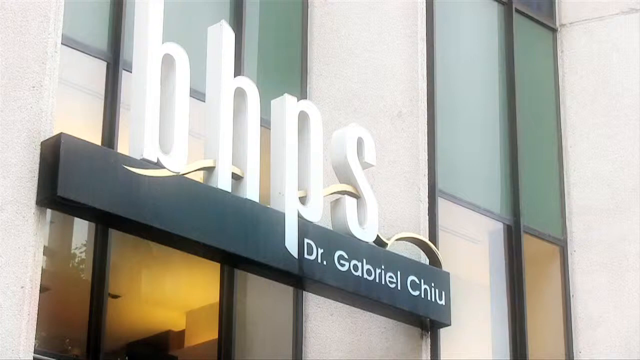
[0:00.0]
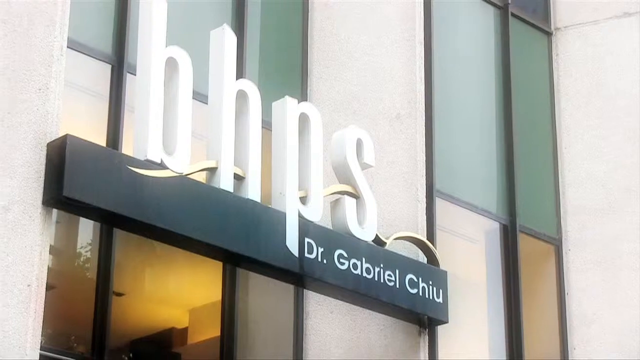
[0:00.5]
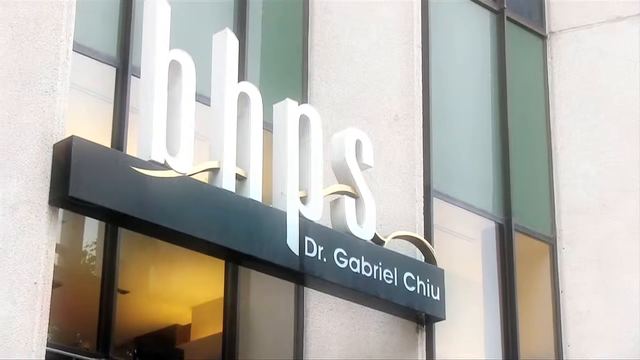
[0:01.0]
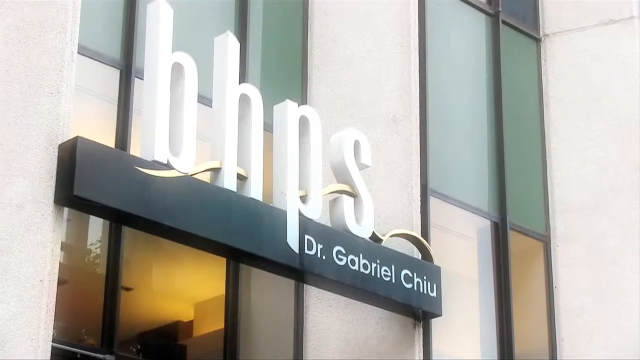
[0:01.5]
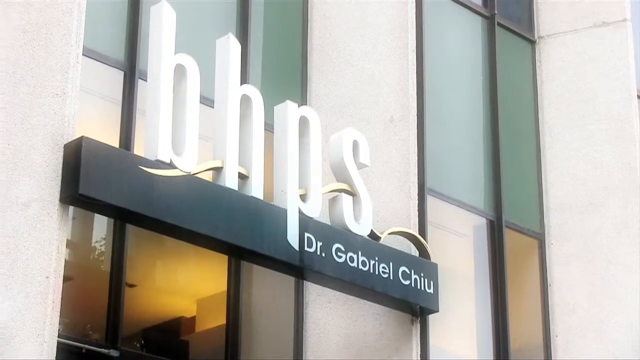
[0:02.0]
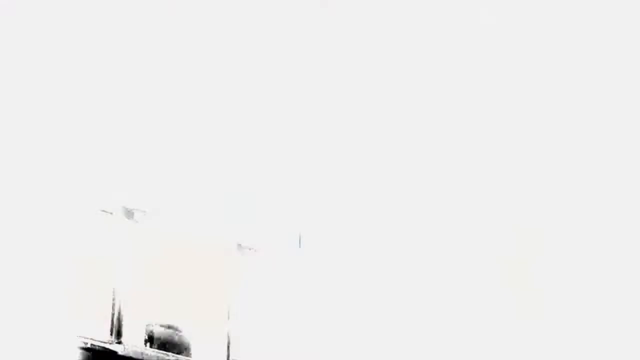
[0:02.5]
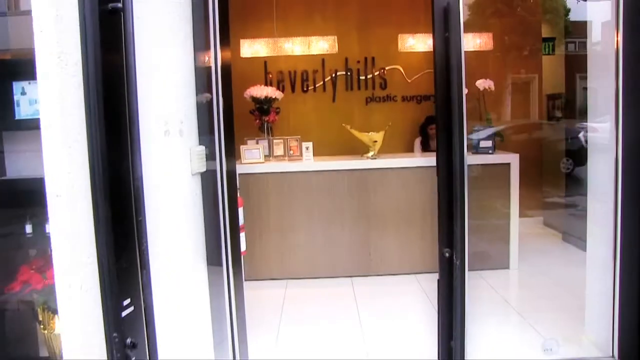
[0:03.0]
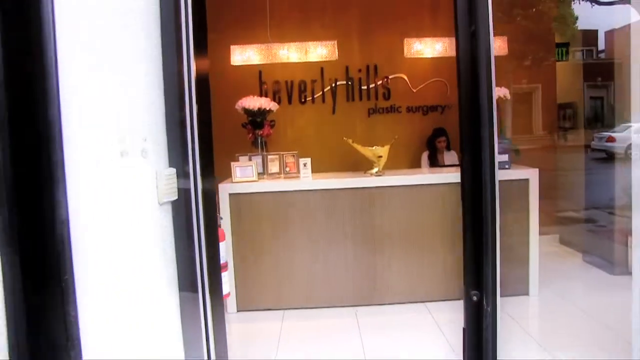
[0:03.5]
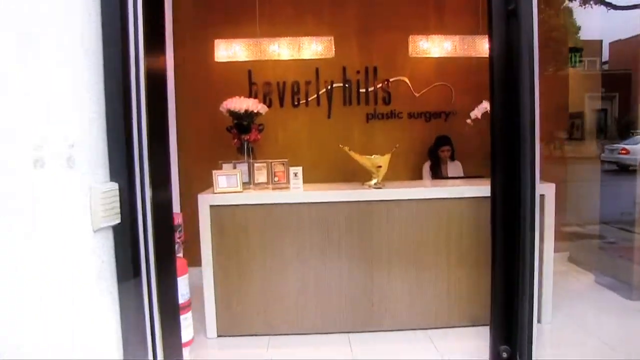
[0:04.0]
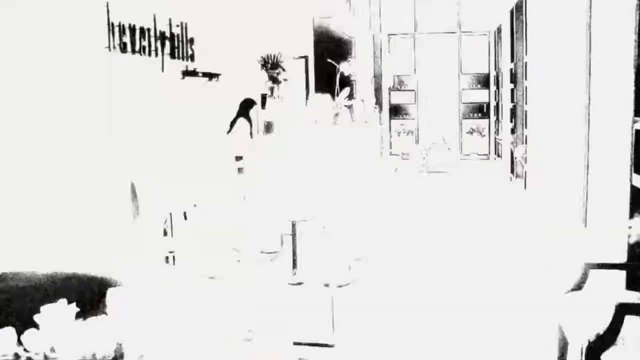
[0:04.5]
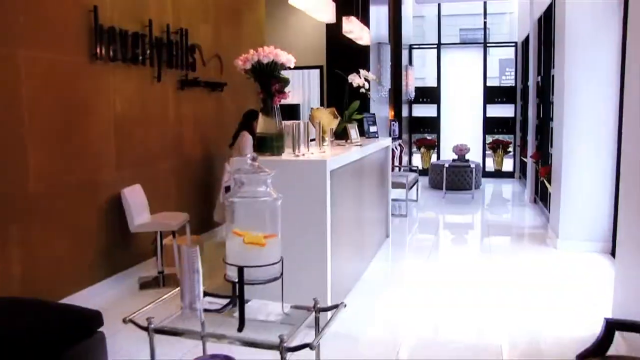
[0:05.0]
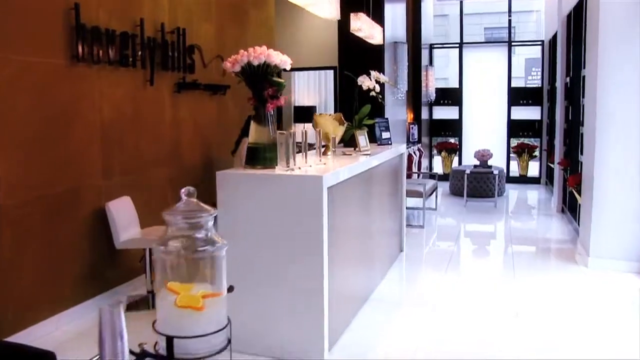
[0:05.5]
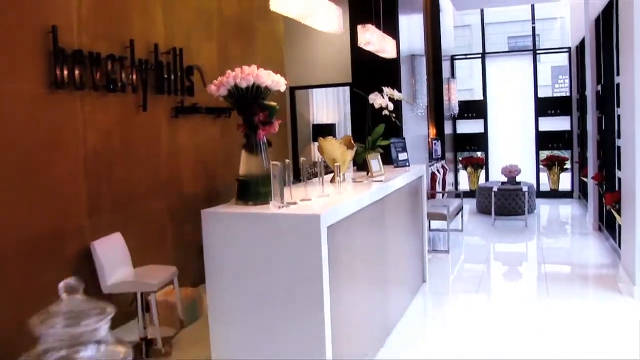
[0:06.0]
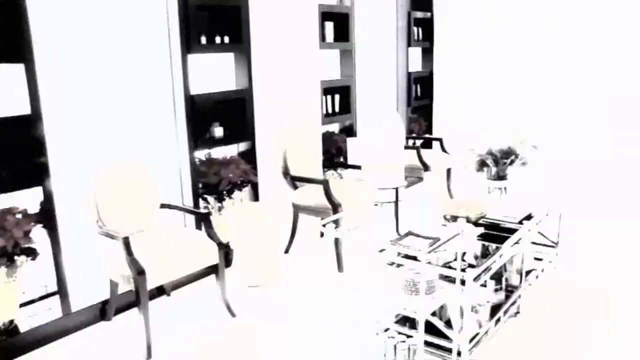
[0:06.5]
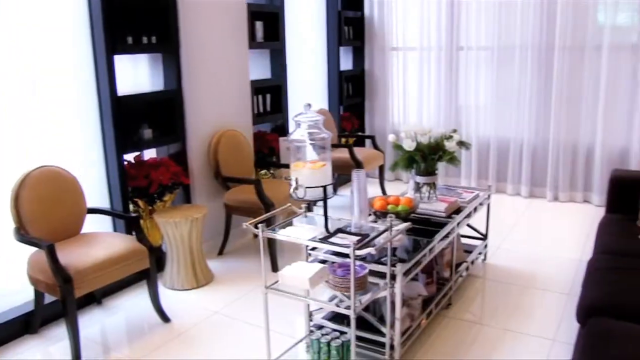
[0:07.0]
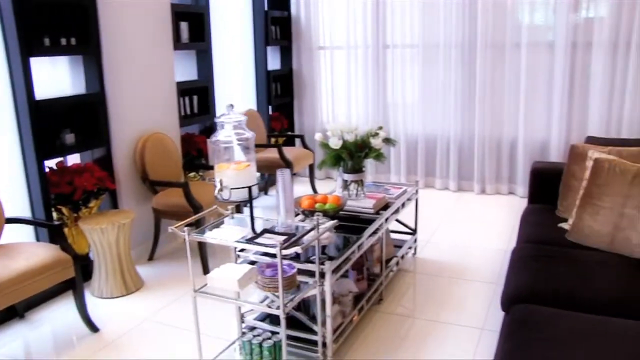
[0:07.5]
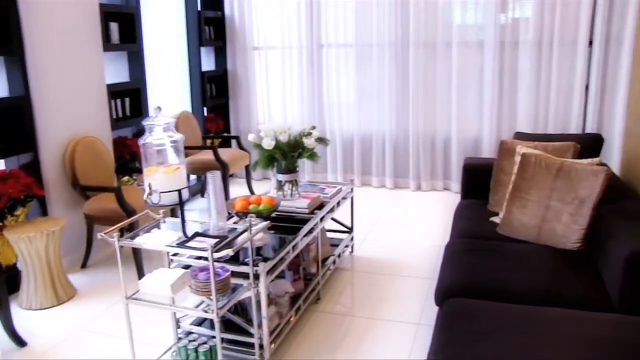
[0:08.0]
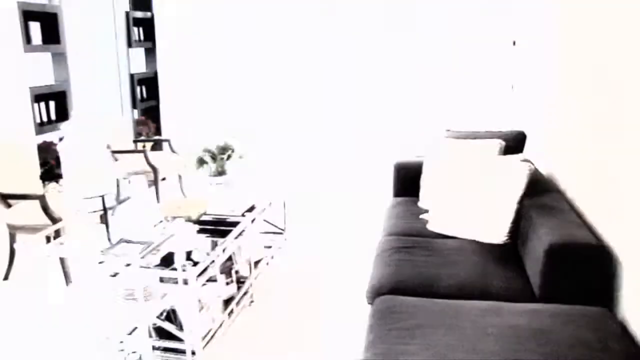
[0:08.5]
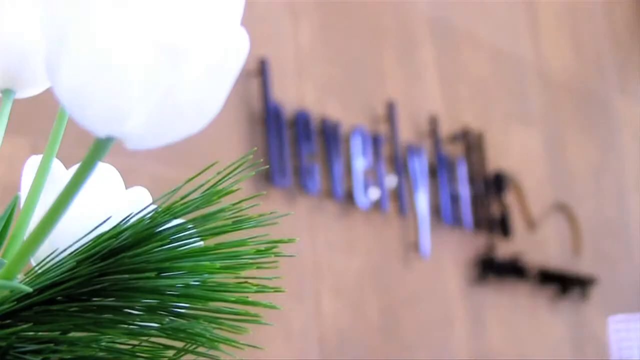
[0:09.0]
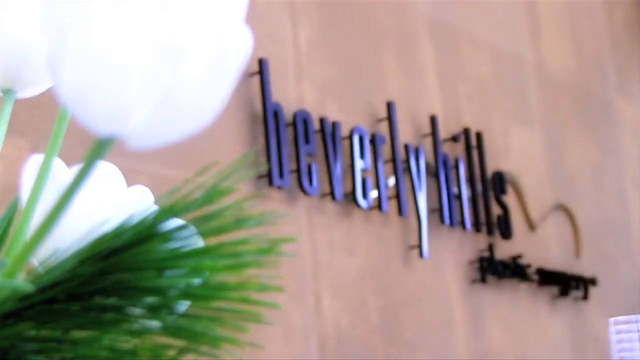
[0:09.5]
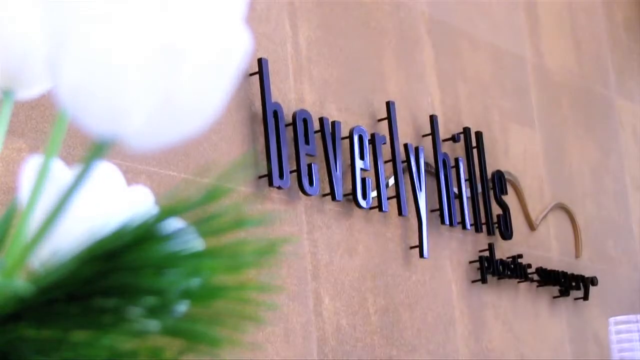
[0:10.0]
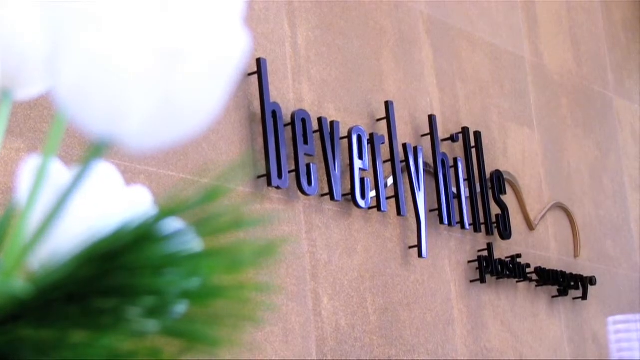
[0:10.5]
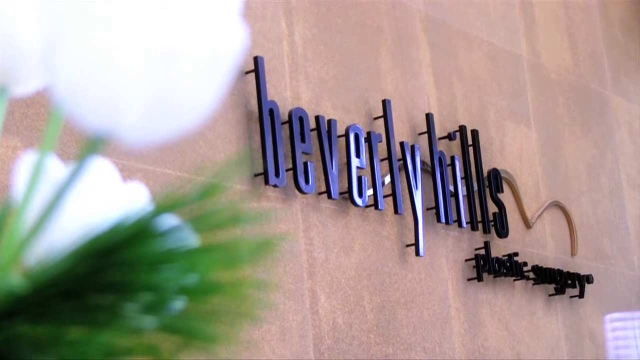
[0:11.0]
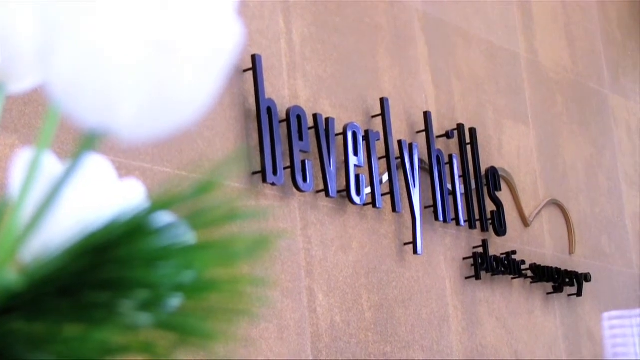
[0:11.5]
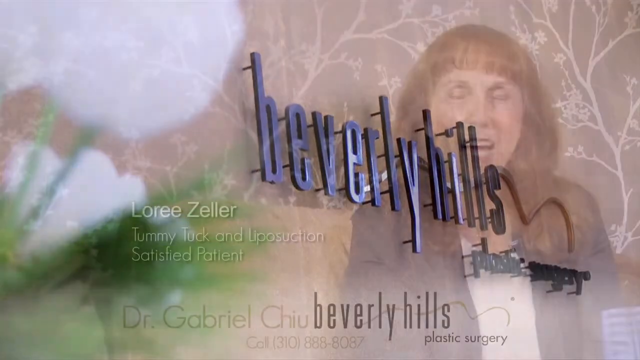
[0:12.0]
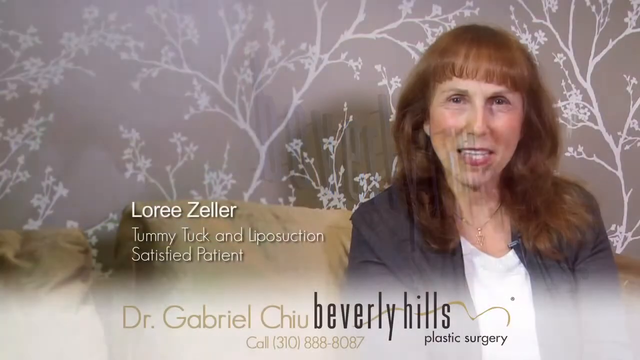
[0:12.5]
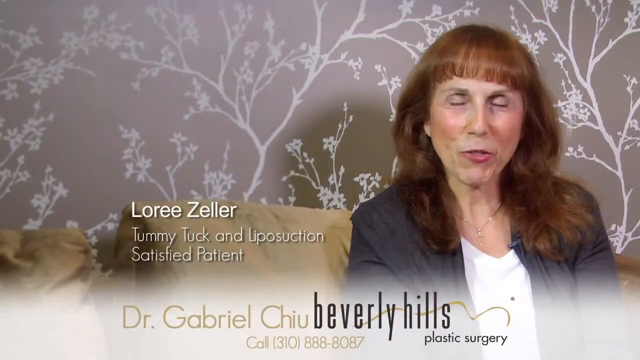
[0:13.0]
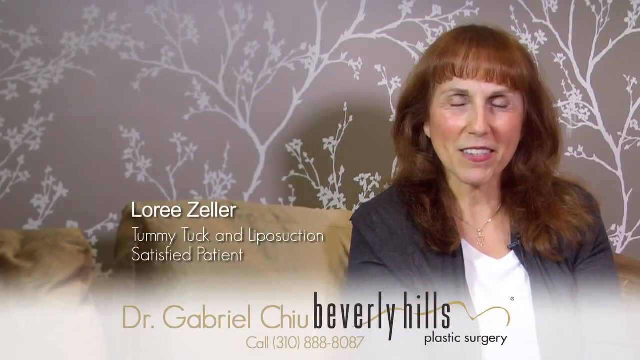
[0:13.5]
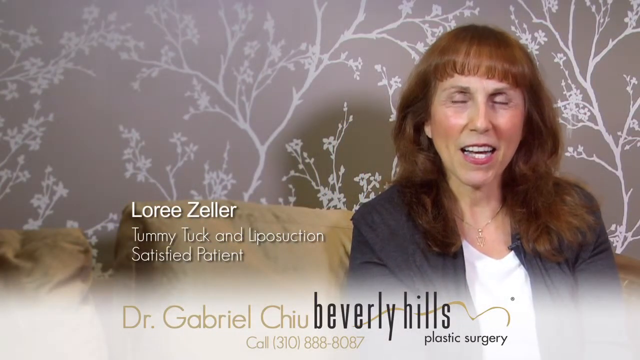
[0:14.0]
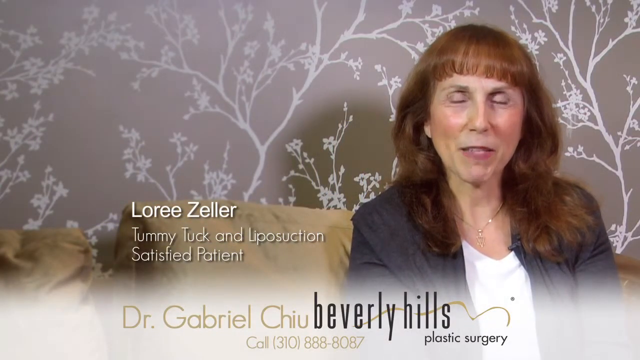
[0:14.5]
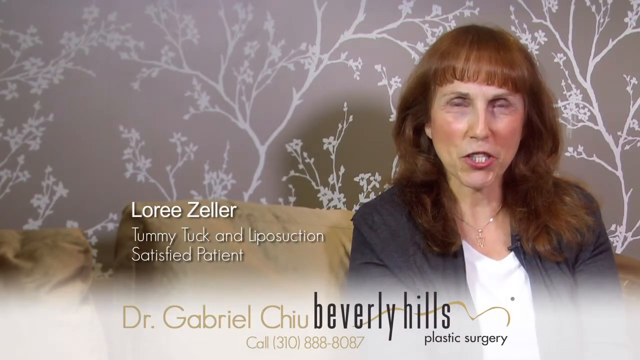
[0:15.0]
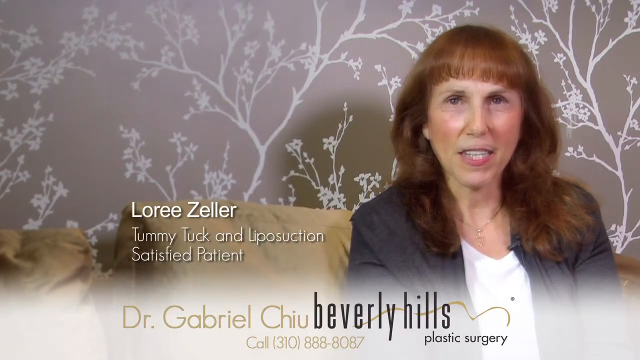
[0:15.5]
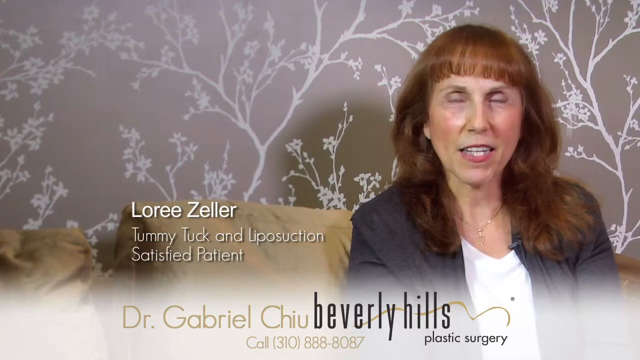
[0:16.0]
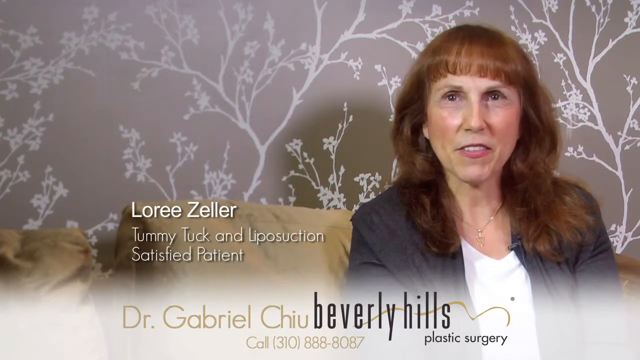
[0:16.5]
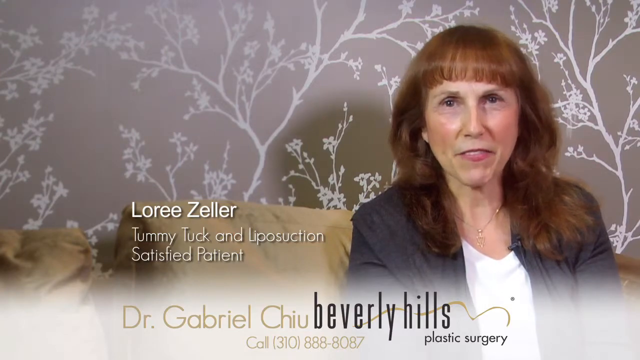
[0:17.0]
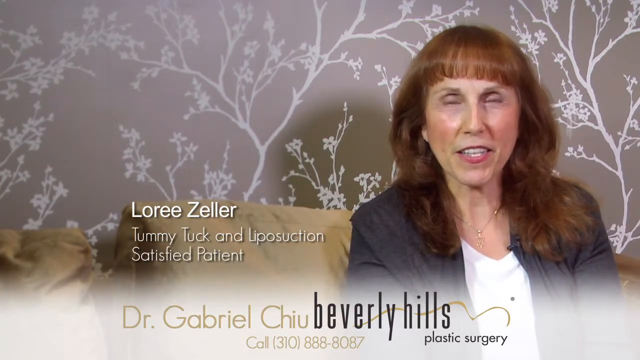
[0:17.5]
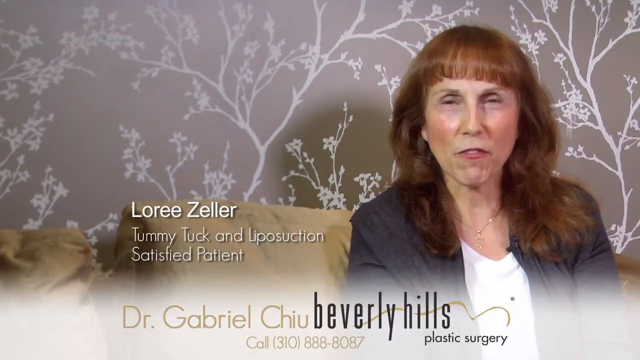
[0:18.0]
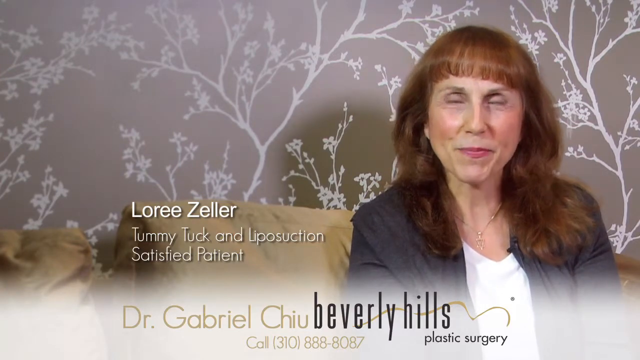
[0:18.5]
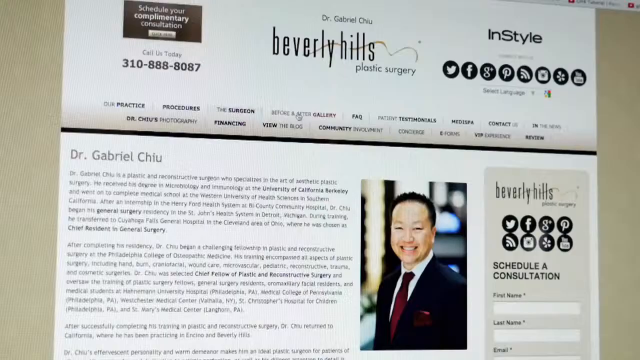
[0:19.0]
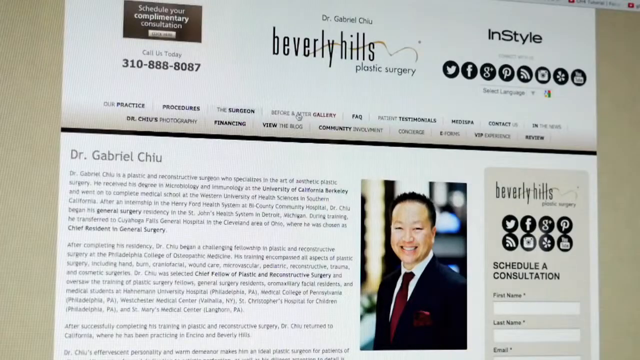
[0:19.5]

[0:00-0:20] The video opens on the exterior of a building bearing "BHPS, Dr. Gabriel Chiu." The screen turns white in a transition, and the next scene shows the camera person entering the building. Inside there is an admin desk, and behind it a wooden wall with black text reading "Beverly Hills Plastic Surgery." A series of quick transitions in a white glow style follows, each shot showing a different area of the plastic surgery clinic. After several of these shots, the camera zooms in on the "Beverly Hills Plastic Surgery" sign on the brown wall. The video then cuts to an interview with a woman named Lori Zeller, a patient who has had a tummy tuck and liposuction. She speaks to the camera.